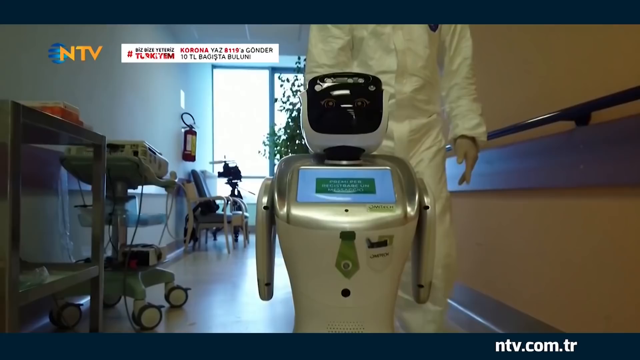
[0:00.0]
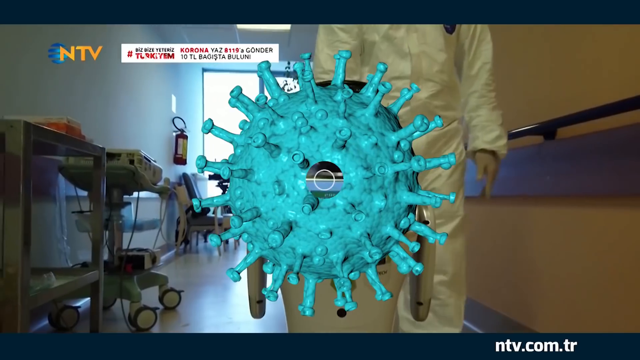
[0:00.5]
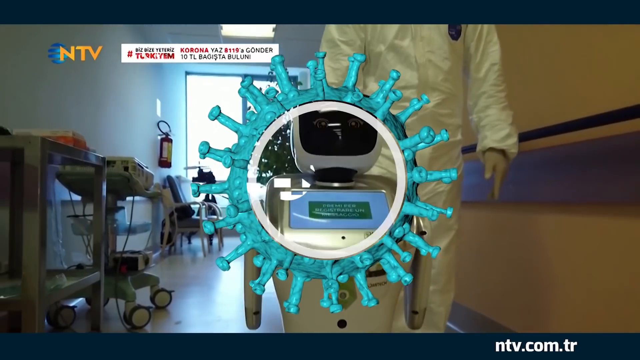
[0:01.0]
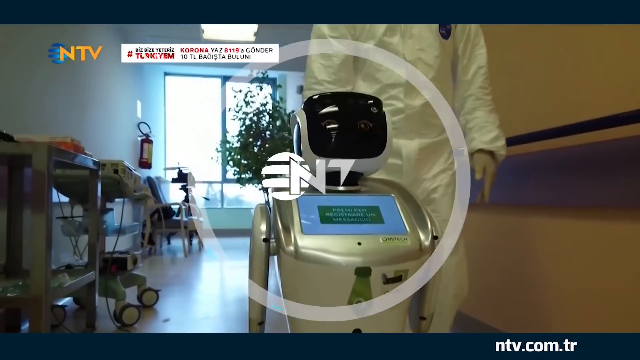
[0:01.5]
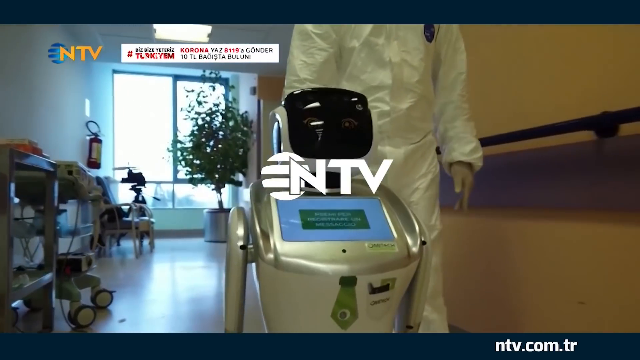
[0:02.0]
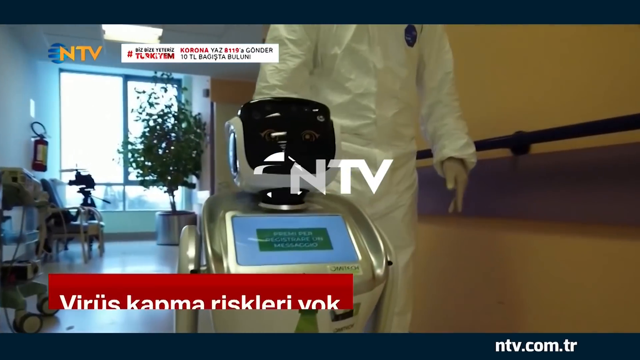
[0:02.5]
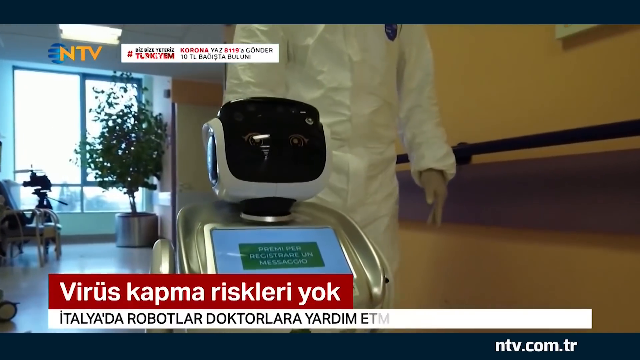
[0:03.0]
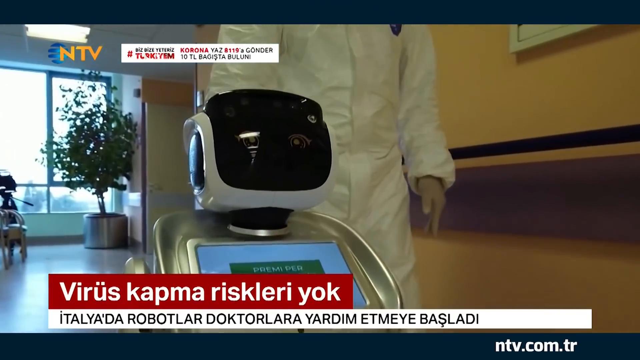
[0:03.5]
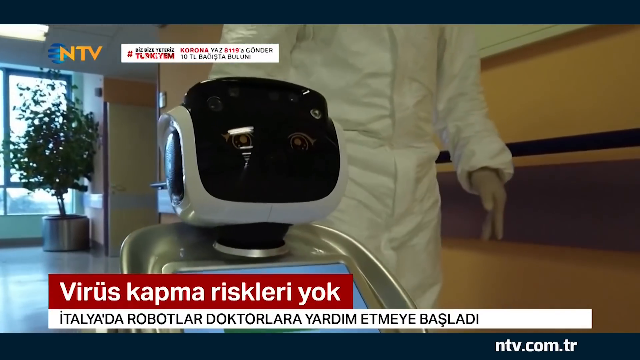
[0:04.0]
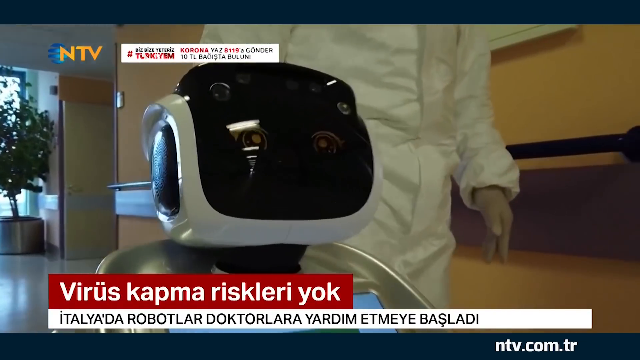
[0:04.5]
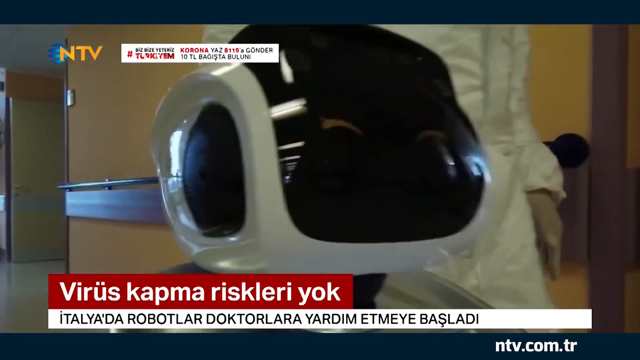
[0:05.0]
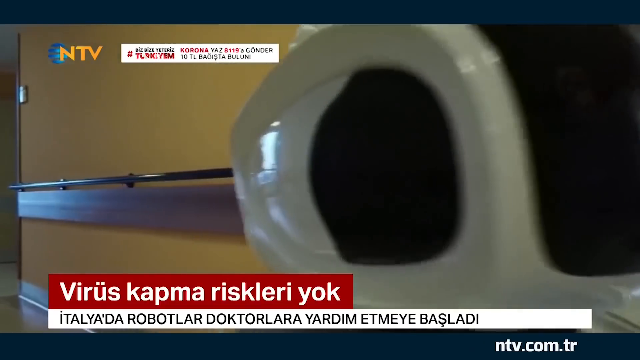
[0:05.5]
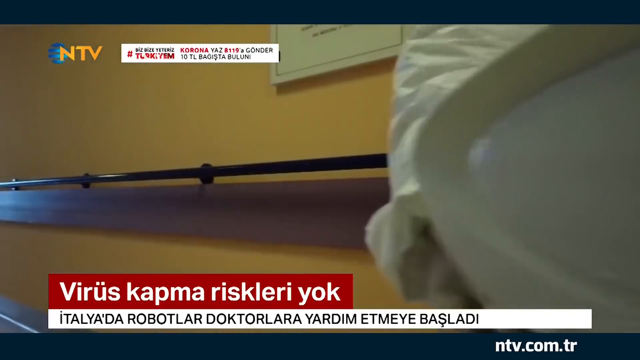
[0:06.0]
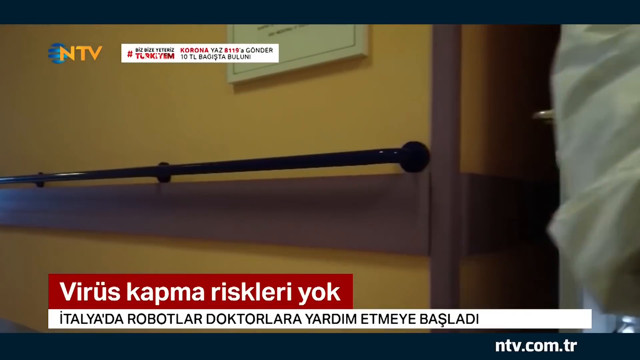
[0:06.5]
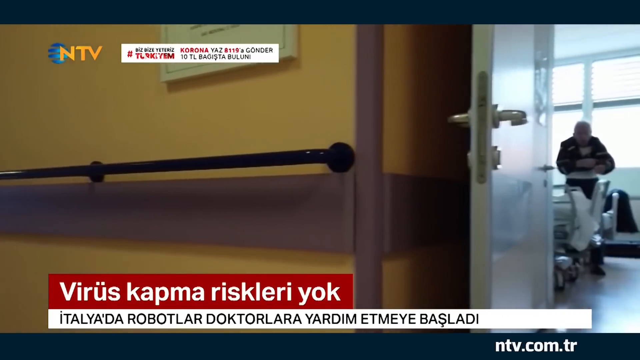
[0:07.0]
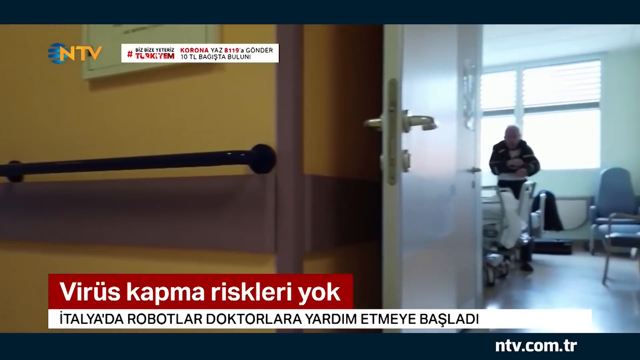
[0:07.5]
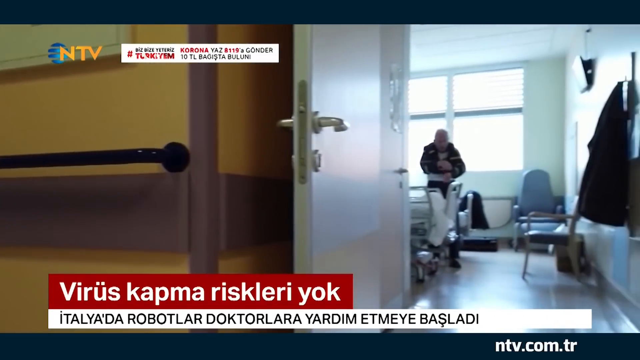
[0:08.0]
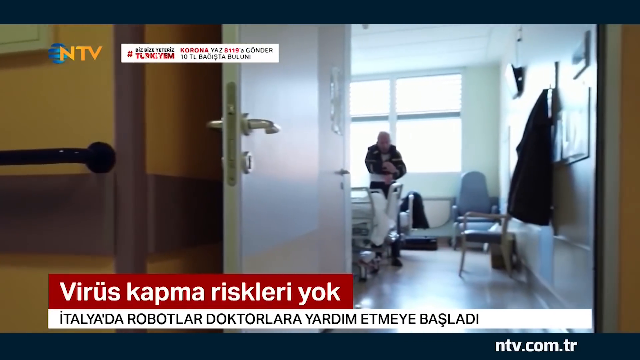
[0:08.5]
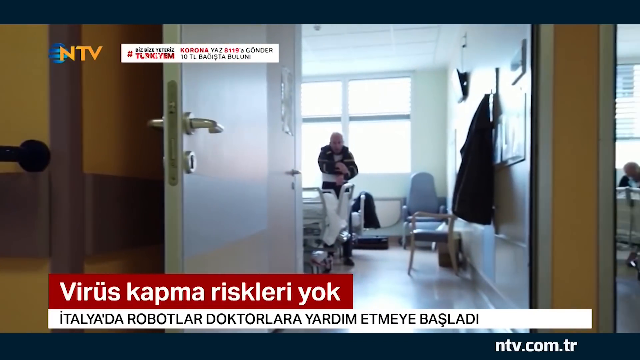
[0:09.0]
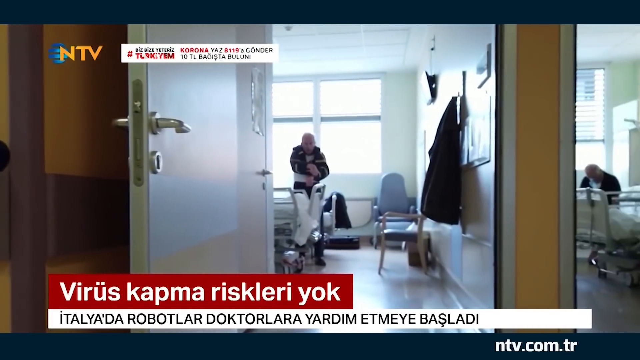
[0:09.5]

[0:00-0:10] A robot appears to be walking with a human. The robot is white and has a screen on it. In the top left corner, "one tv" appears in orange, the name of the channel broadcasting the news. A heading at the bottom left of the screen is written in a foreign language and is difficult to read. The robot seems to be fairly intelligent. Across the top of the screen is a lot of very small information in fine print.